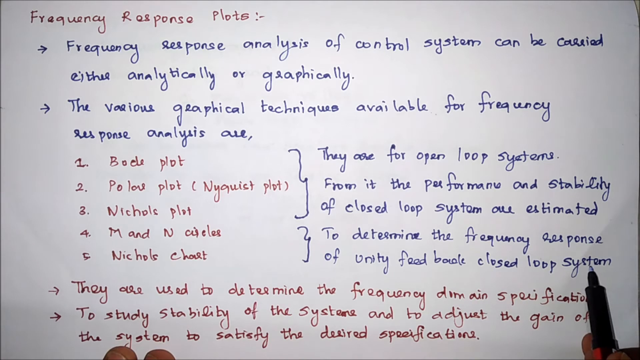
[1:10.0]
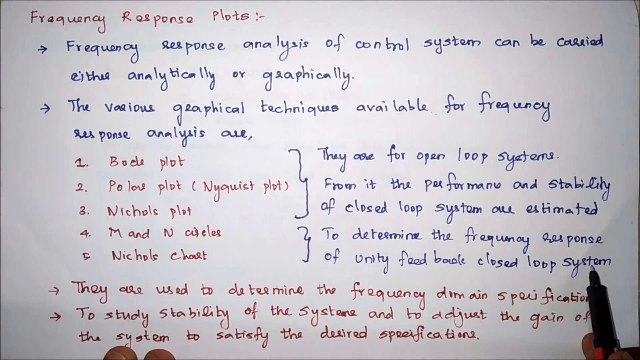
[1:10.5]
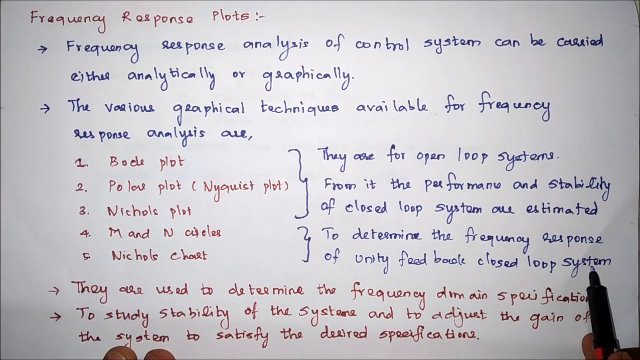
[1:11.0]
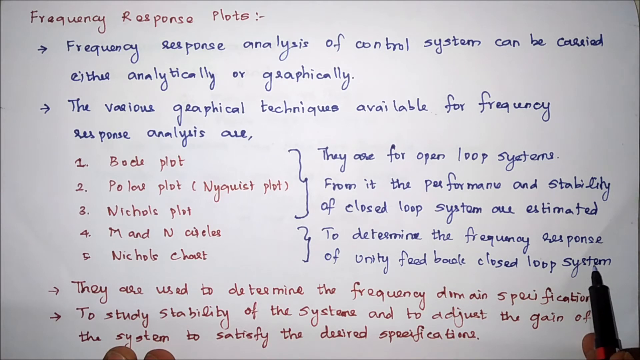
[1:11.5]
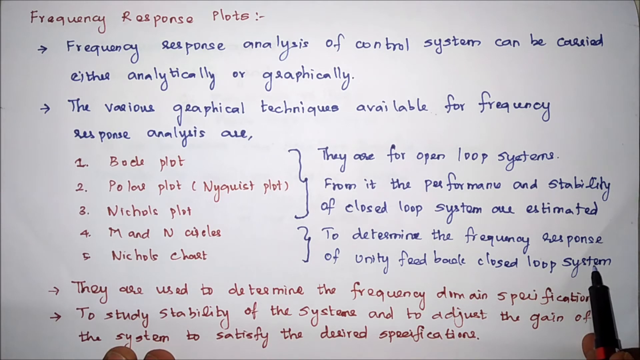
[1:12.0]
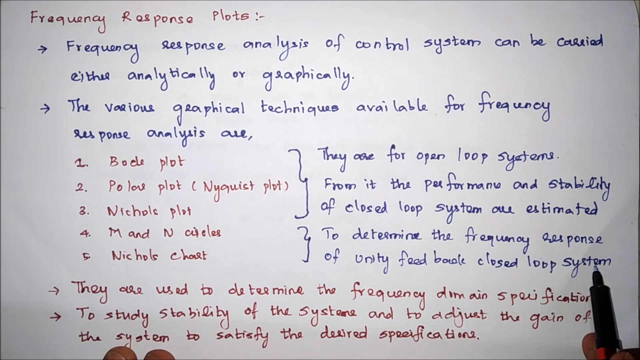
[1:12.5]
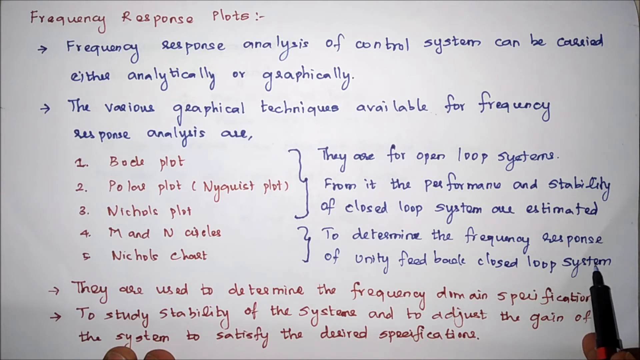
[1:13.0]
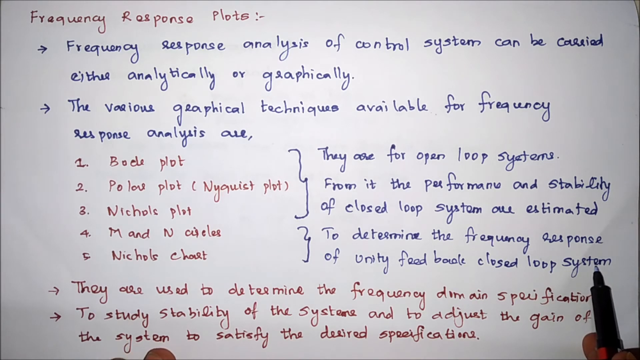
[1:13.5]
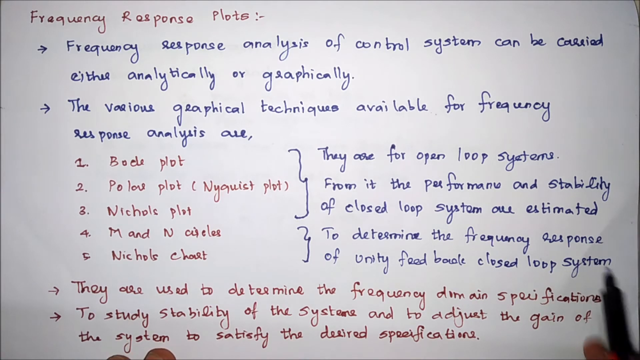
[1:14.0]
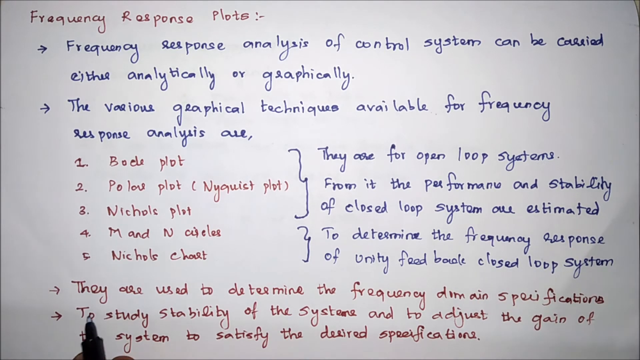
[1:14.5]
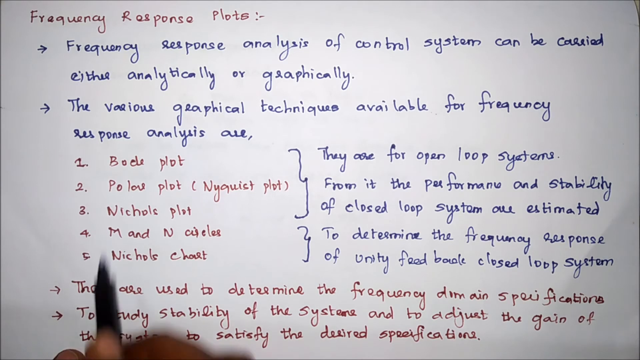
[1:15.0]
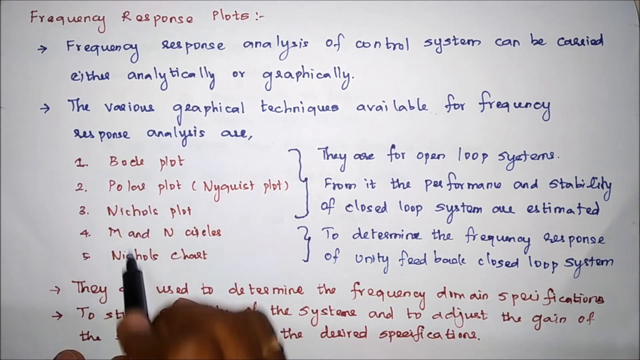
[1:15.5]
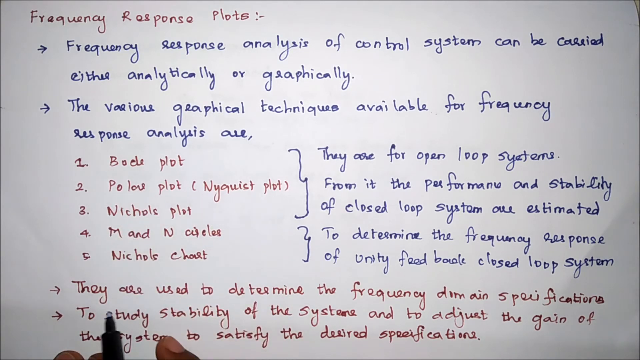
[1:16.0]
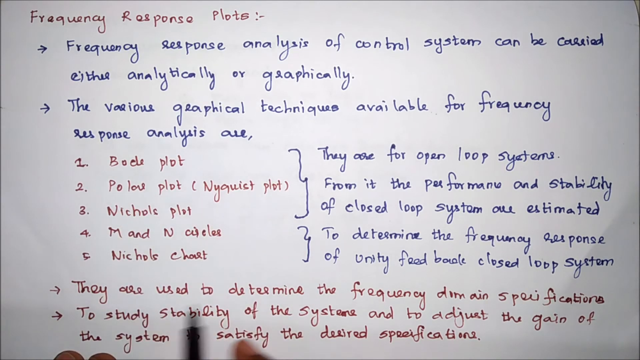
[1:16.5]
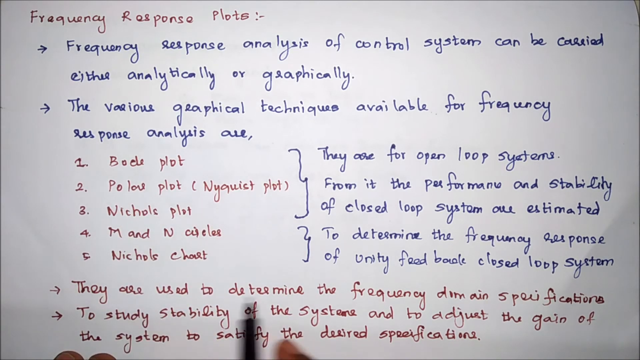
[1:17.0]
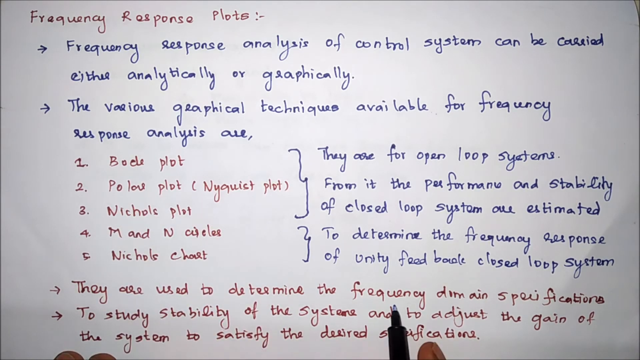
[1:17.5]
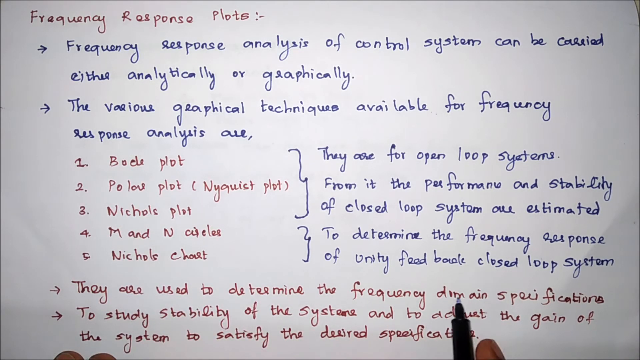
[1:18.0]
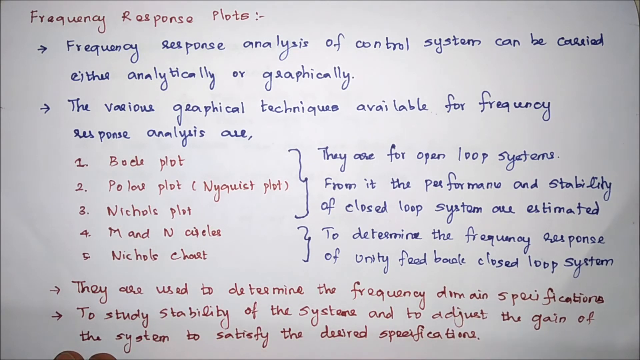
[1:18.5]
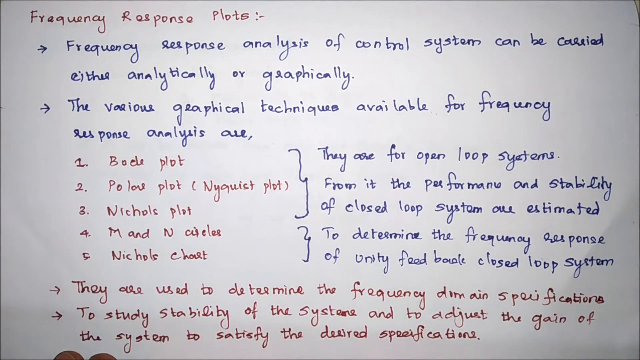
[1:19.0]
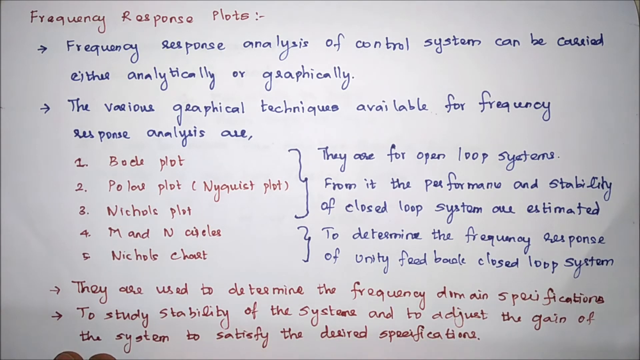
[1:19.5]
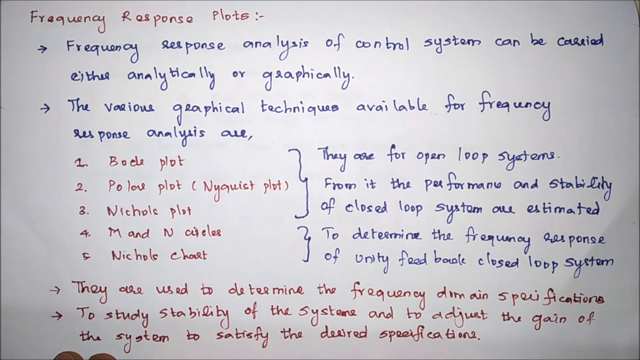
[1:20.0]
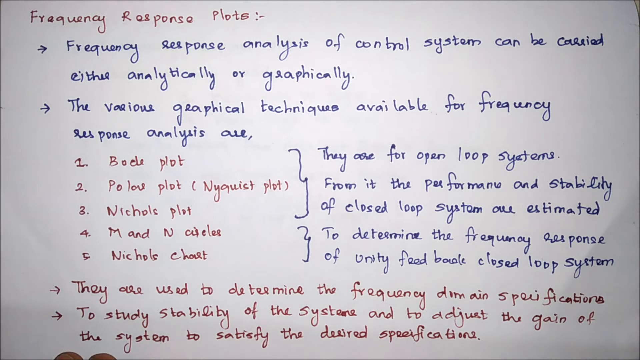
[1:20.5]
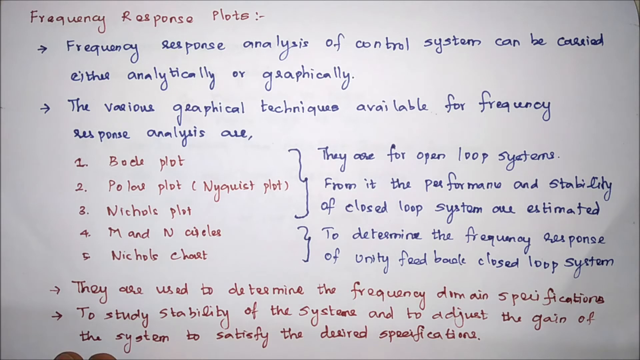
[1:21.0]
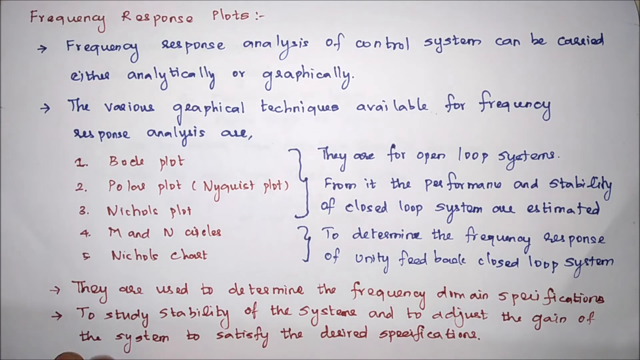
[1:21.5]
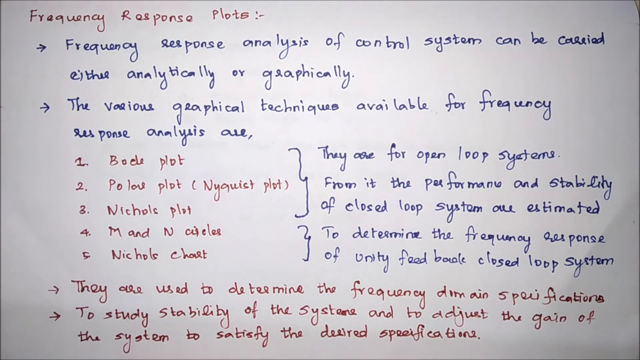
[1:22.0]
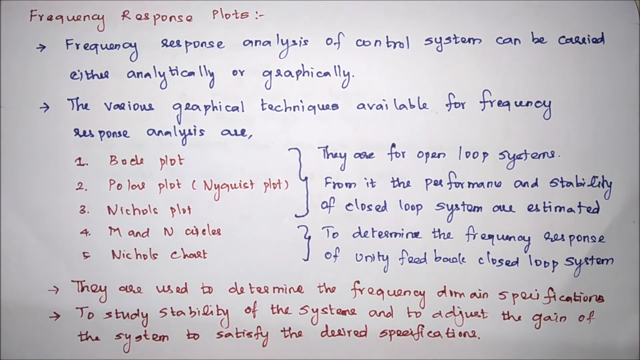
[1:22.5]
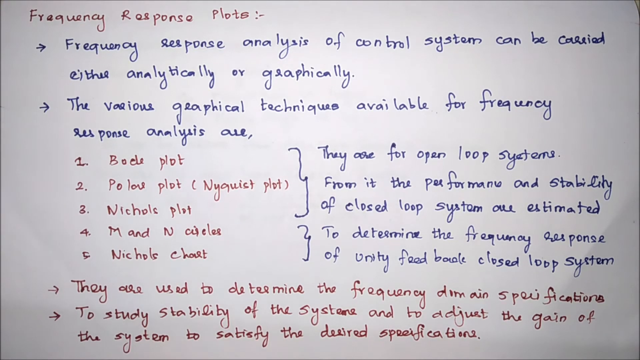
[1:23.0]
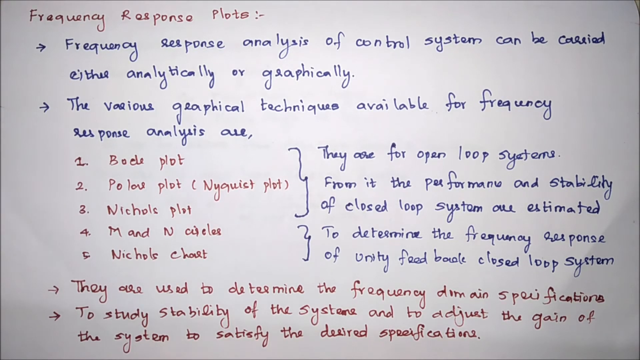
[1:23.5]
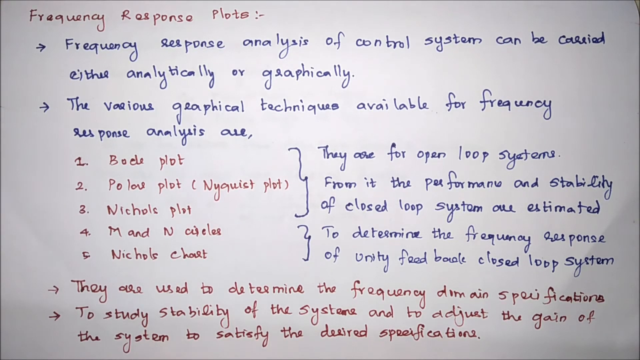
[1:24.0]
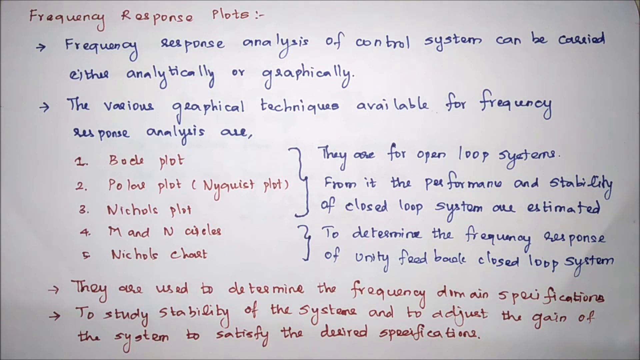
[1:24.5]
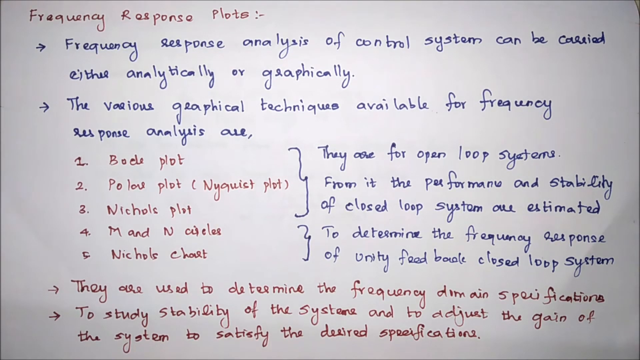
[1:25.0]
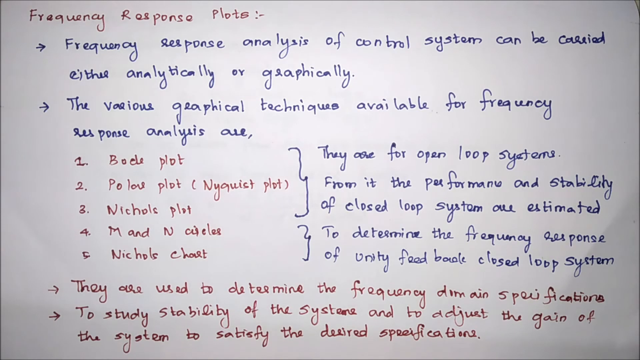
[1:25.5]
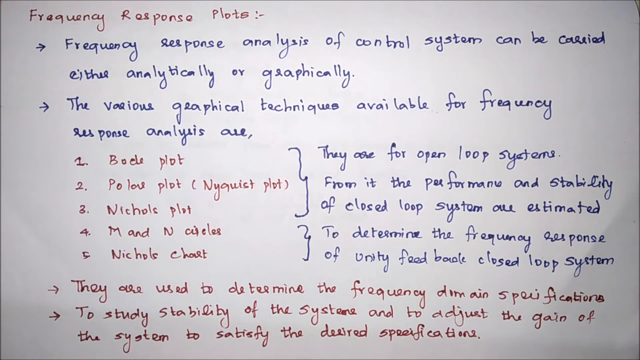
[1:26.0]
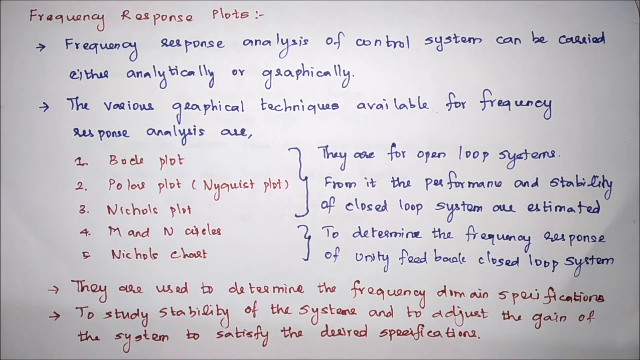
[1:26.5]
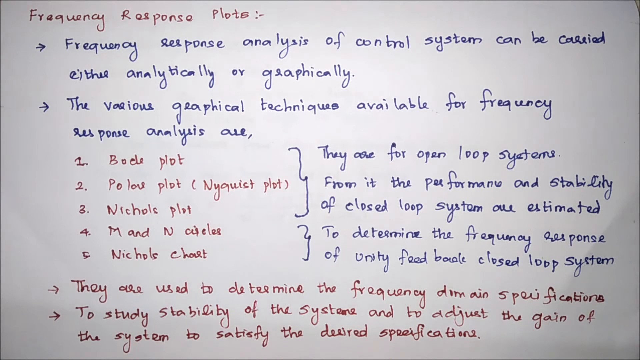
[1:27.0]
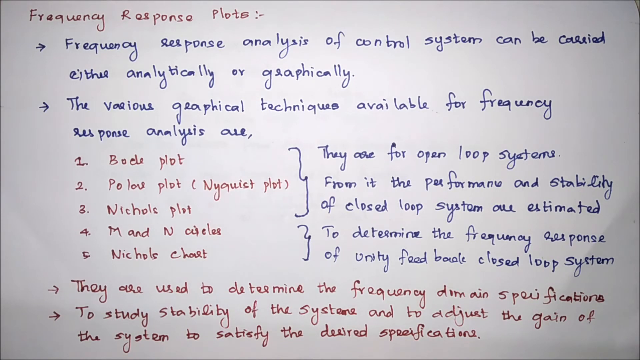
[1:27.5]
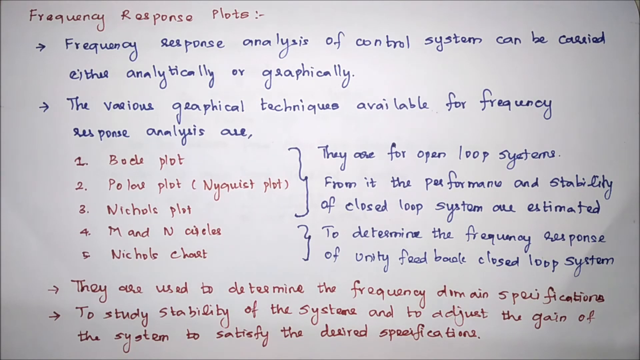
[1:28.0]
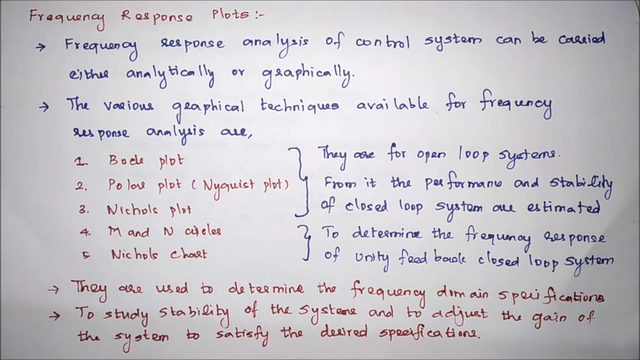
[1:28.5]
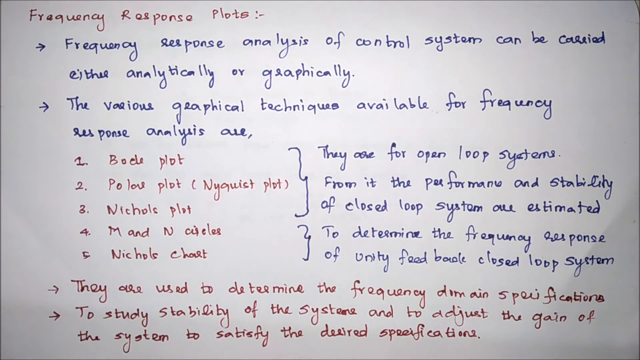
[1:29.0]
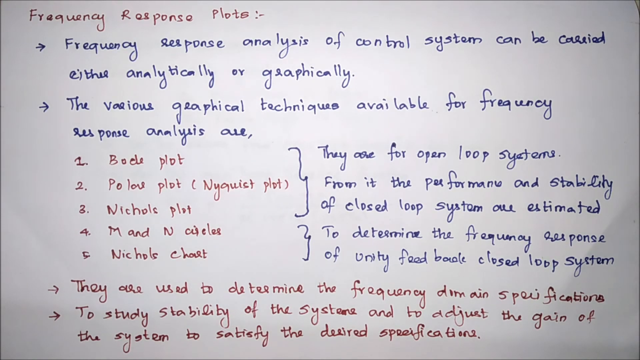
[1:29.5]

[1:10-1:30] The page shows red writing and sentences and phrases written in blue ink, including a list of plots written in red labeled 1 to 5. The pen points at the blue words directly across from this list and moves across the sentences, including "to determine the frequency response of unity", staying on those words. It then goes to the bottom, where more red writing says "they are used to determine the frequency domain specifications", and the sentence directly underneath says "To study stability of systems and to adjust the gain of the system to satisfy the delivered specifications."